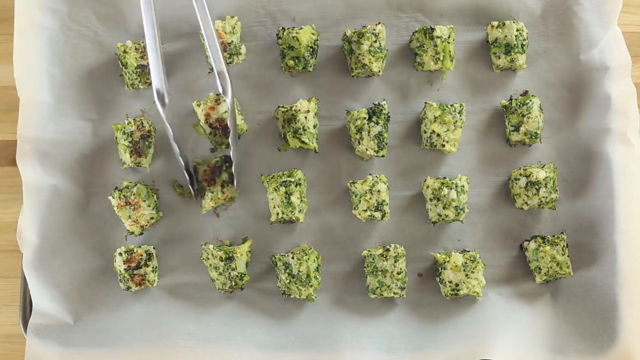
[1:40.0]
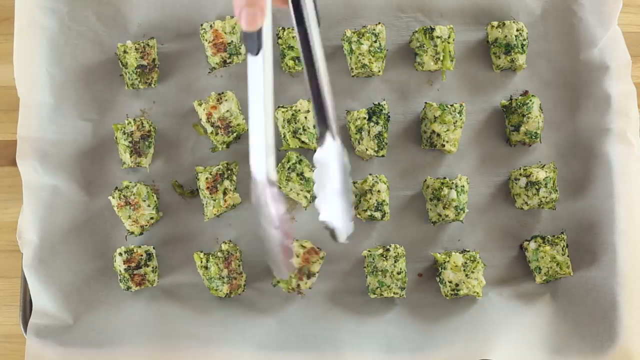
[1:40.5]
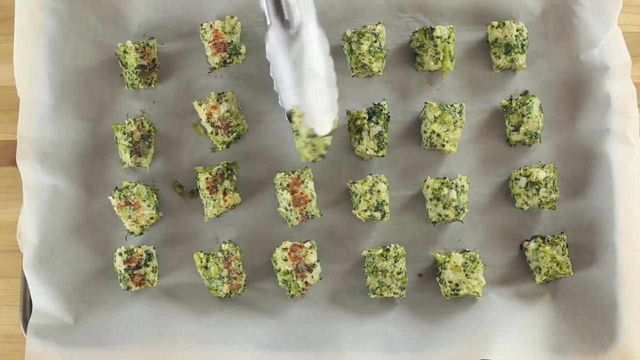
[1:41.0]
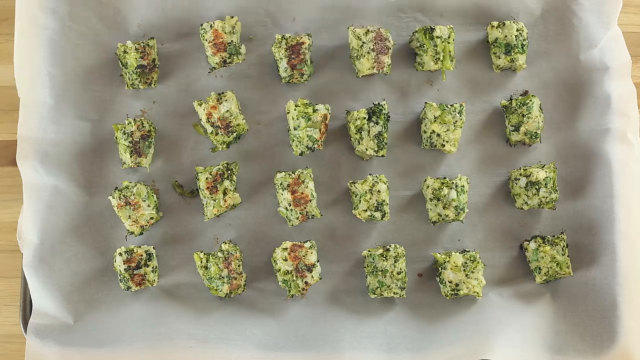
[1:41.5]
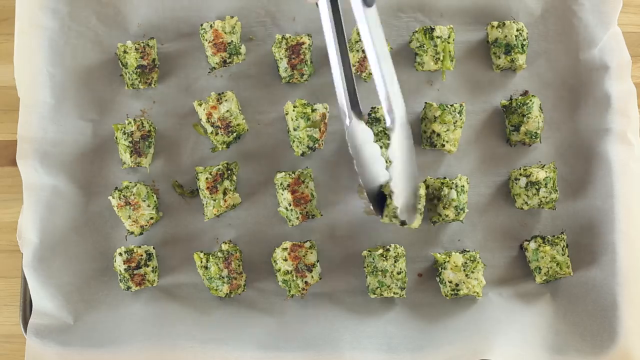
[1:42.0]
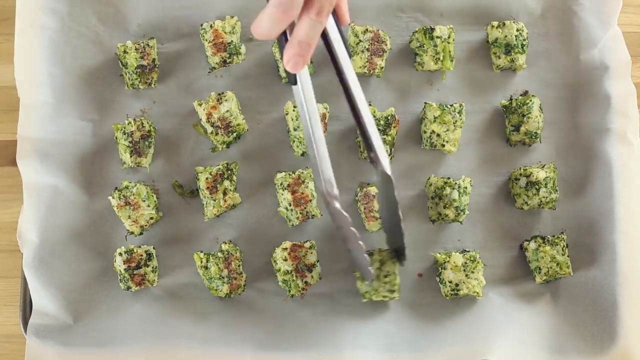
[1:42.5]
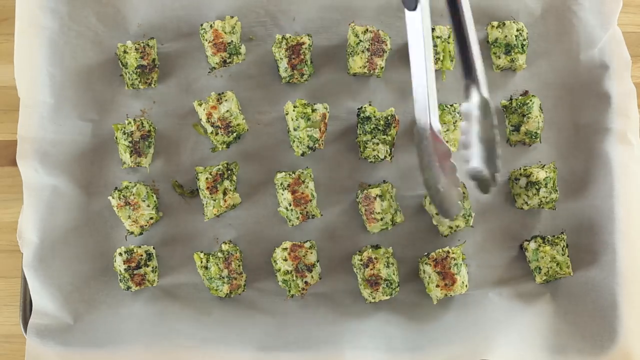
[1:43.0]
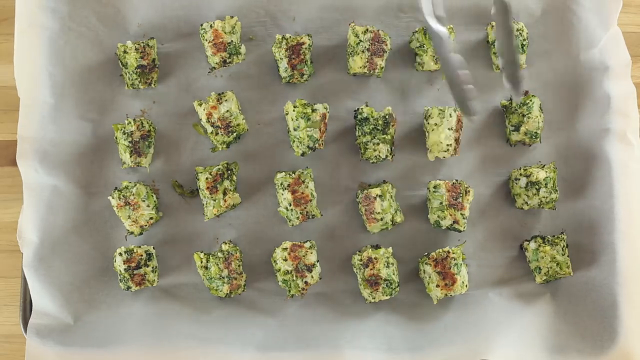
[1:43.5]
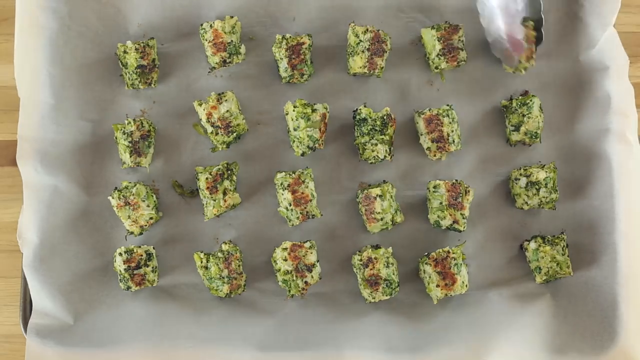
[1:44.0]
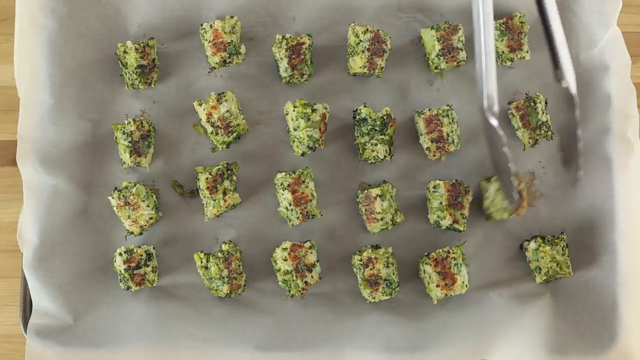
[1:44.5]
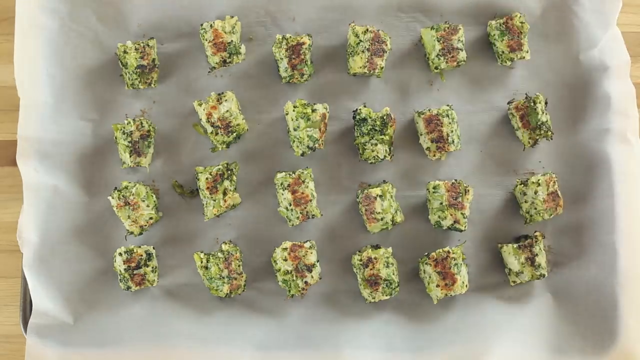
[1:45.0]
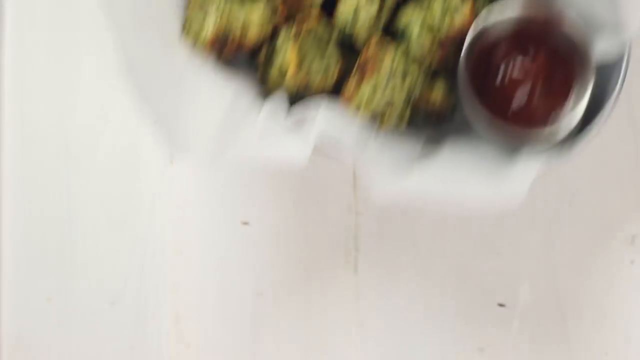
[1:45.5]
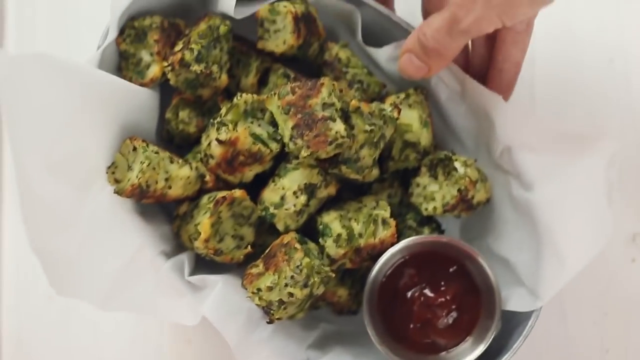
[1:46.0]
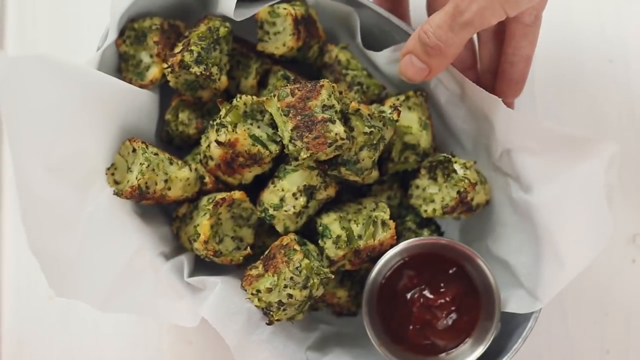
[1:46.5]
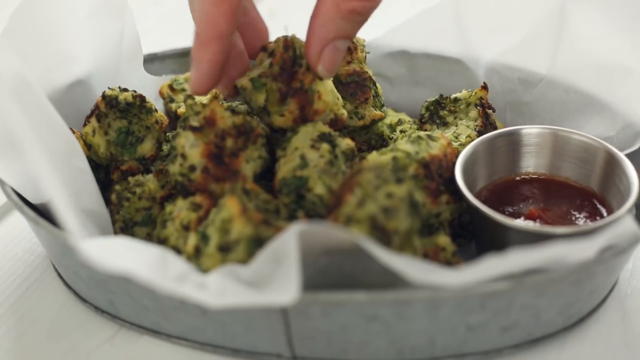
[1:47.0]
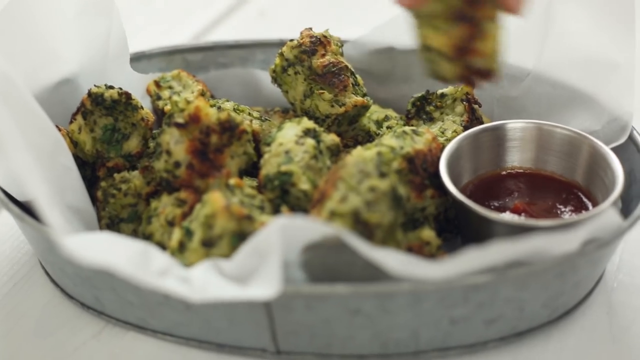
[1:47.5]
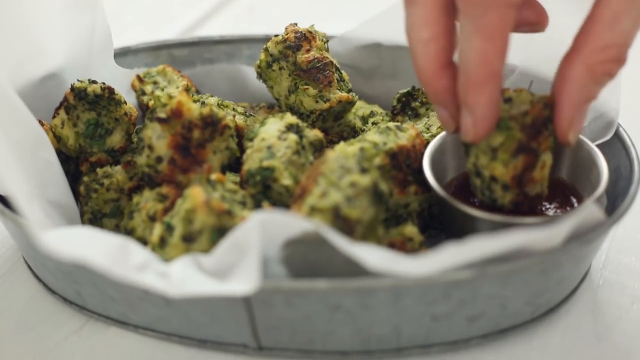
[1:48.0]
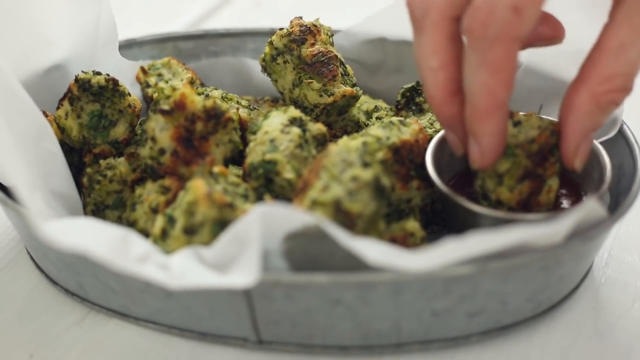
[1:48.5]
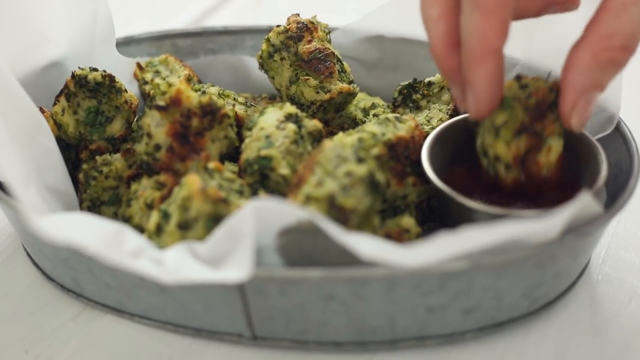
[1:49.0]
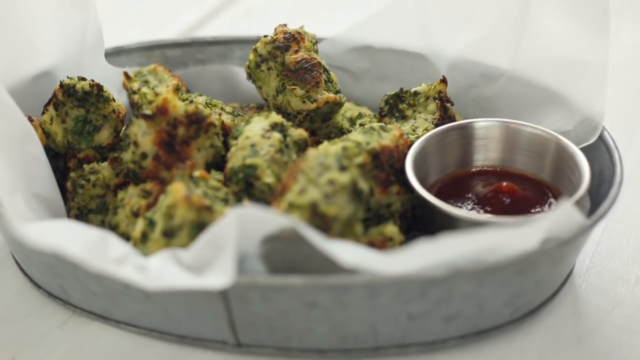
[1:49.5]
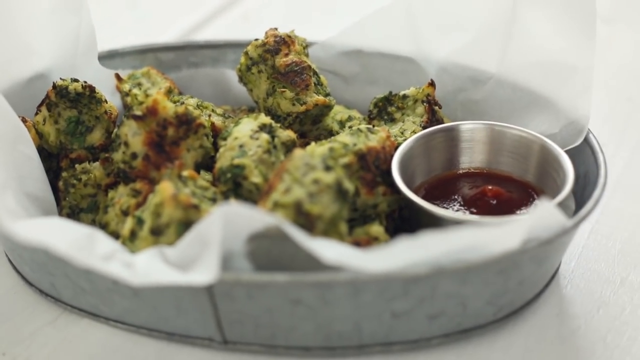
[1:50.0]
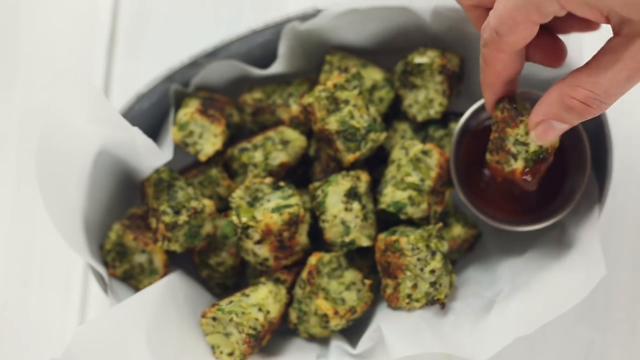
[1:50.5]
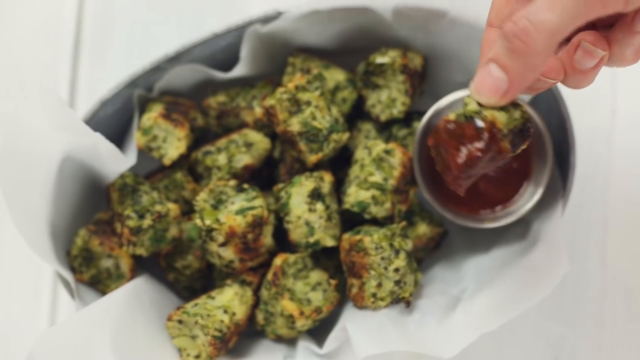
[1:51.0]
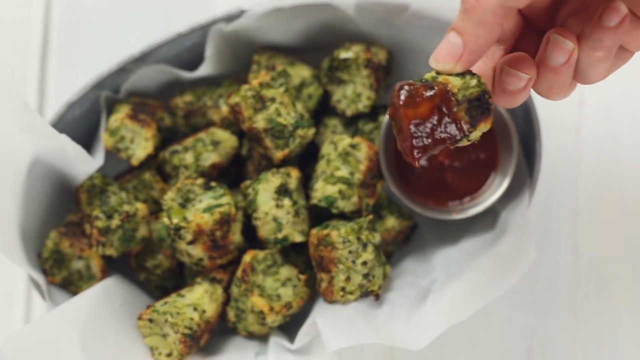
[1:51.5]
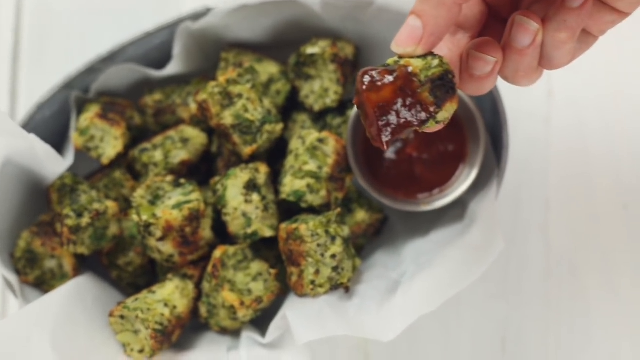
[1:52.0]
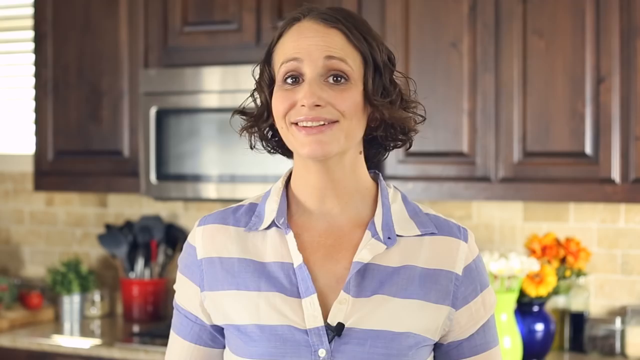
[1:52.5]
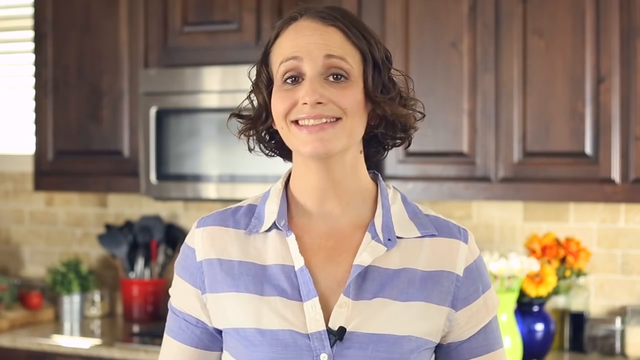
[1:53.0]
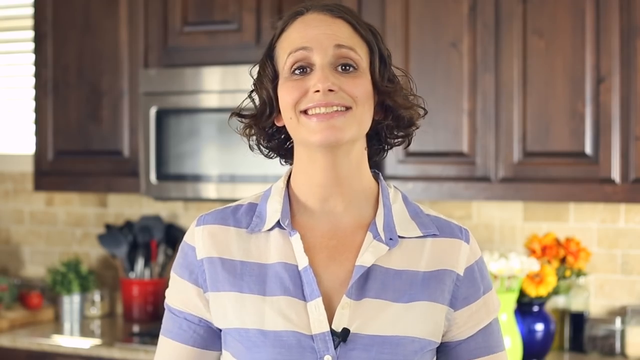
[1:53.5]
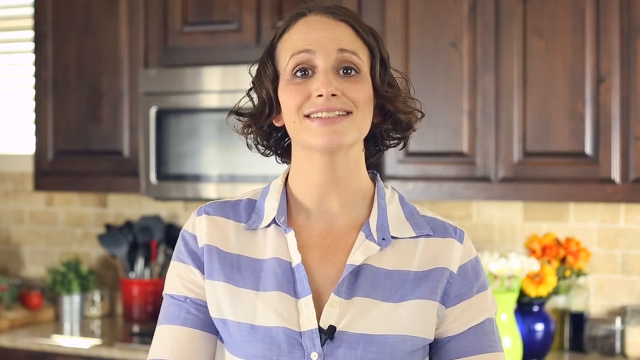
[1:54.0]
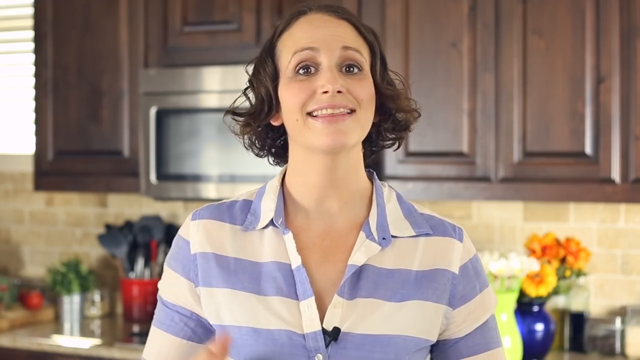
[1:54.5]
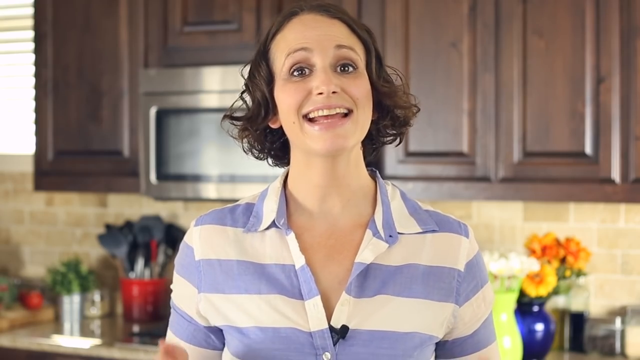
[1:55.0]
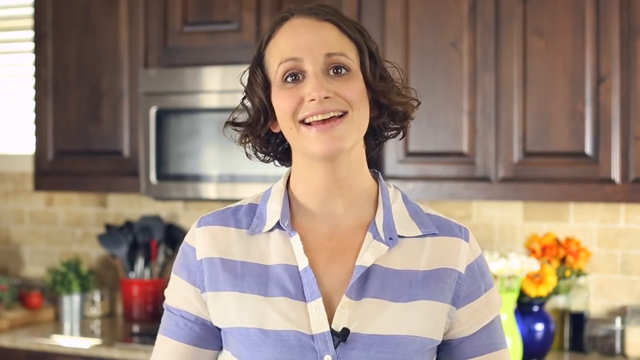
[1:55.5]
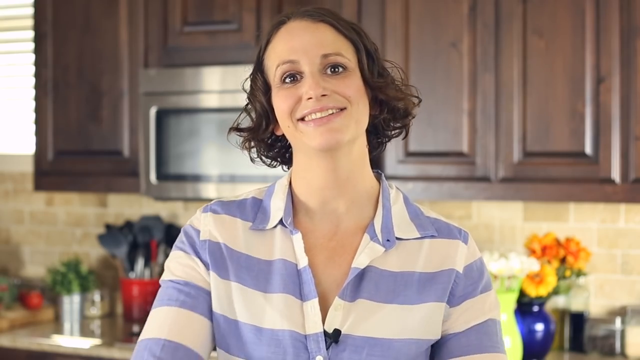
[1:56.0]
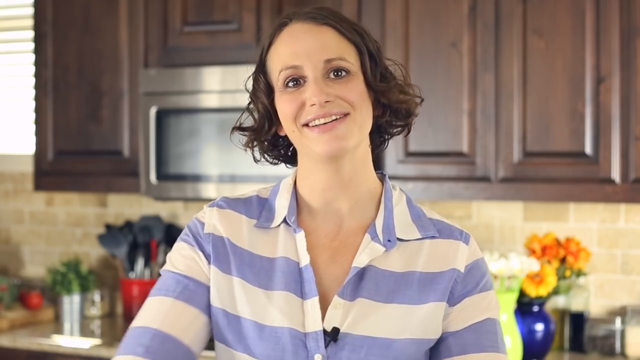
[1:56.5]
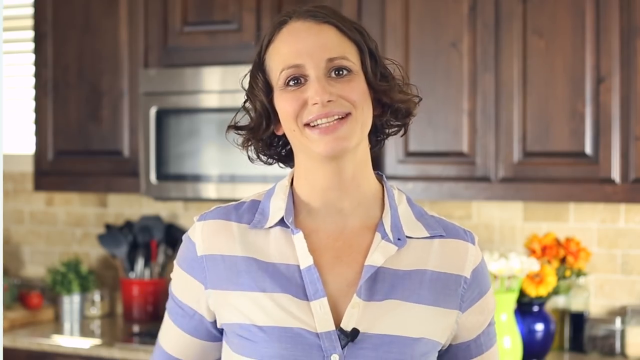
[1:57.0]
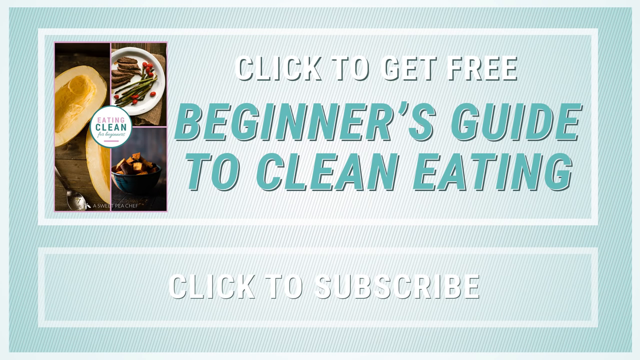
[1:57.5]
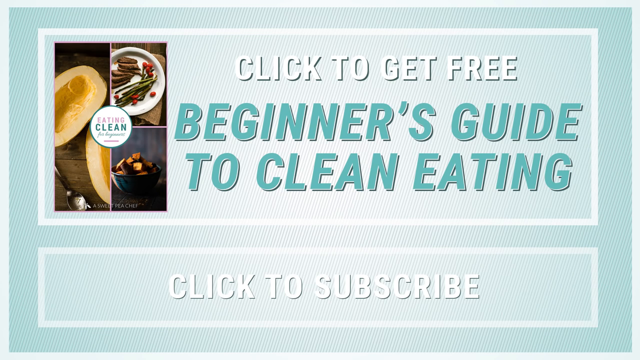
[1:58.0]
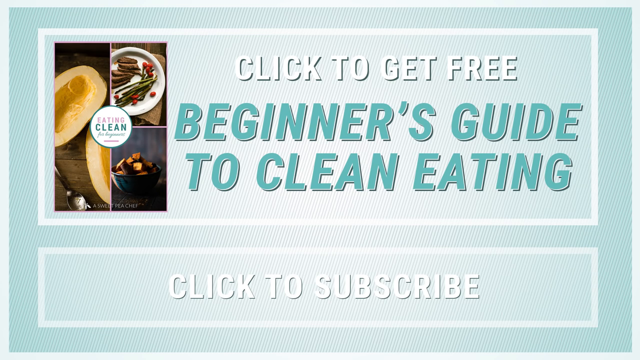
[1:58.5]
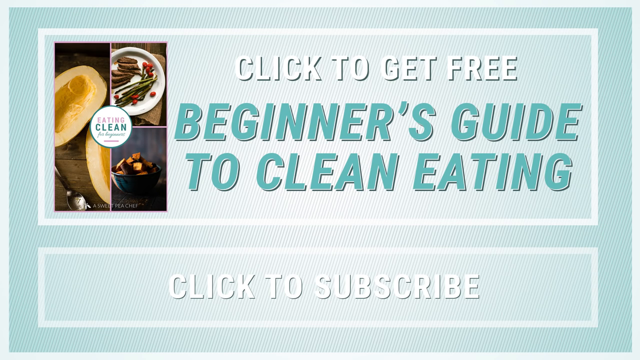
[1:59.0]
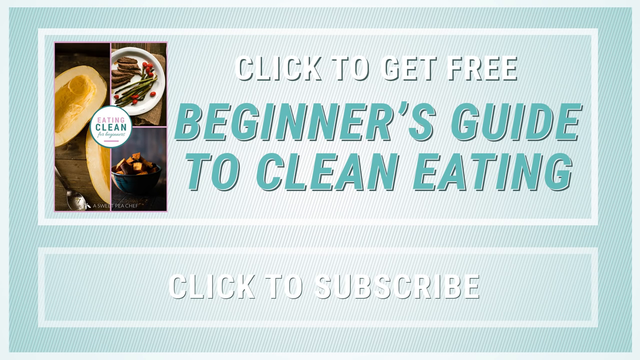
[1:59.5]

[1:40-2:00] A large tray covered with white baking paper holds light green broccoli tater tots arranged in four rows of six. A pair of tongs flips the tots over so they can cook on the other side; the video is sped up, so the flipping is very fast. As the tots are flipped, the undersides that were cooking are a bit browned. Once all the tots are done, the screen changes to a white tabletop, where a close-up shows a hand setting down a small silver tin bowl lined with wax paper or some kind of white cooking serving paper, holding a pile of the light green broccoli tots with a yellow coating from the cheese and a little browning from being cooked. There is also a small circular sauce cup that looks filled with ketchup or barbecue sauce. Fingers grab one tot and dip it into the ketchup. From another angle, looking down at the bowl, the hand dips a broccoli tot into the ketchup, almost completely covering it, and kind of holds it up and rotates it in front of the camera. The video changes to a woman in a V-neck collared shirt with thick white and light purple horizontal stripes. She has shoulder- or ear-length hair that is curly at the bottom, brown eyes and pale skin, and a large smile, and she appears to be standing in a home kitchen. She talks to the camera for a few seconds. The video then changes to a light blue background. At the top is a white-outlined rectangular box; on its left side there appears to be a book with a collage of three food images: a cut squash, a bowl of some type of cut brown vegetables, and a plate of steak and asparagus. To the right, white text reads "Click to Get Free," and beneath it teal text reads "Beginner's Guide to Clean Eating." Below that box, another smaller rectangular box across the screen contains white text reading "Click to Subscribe."